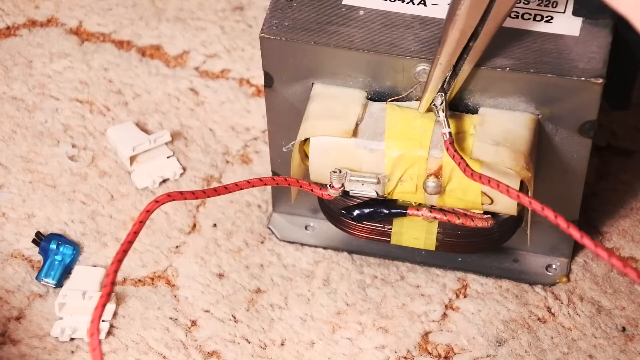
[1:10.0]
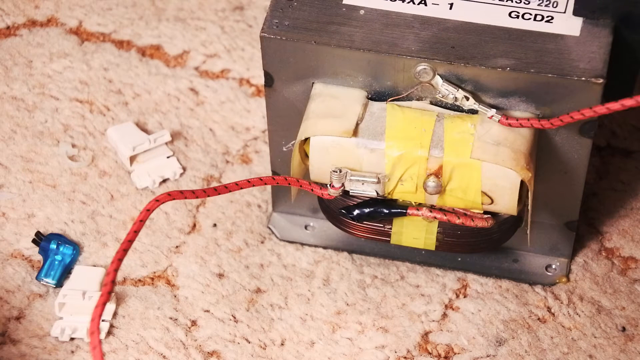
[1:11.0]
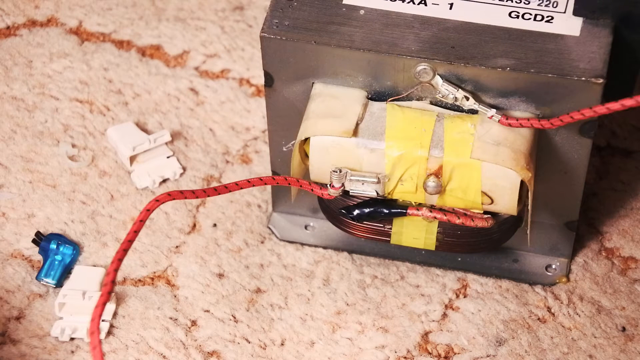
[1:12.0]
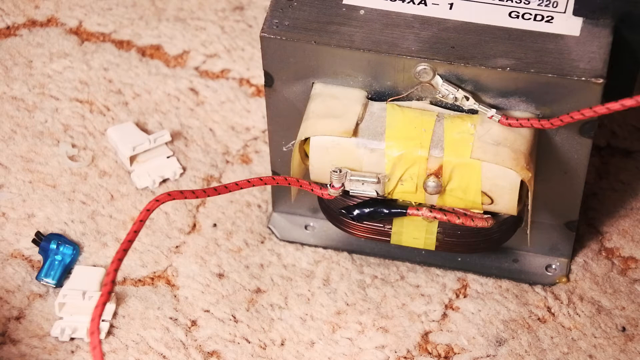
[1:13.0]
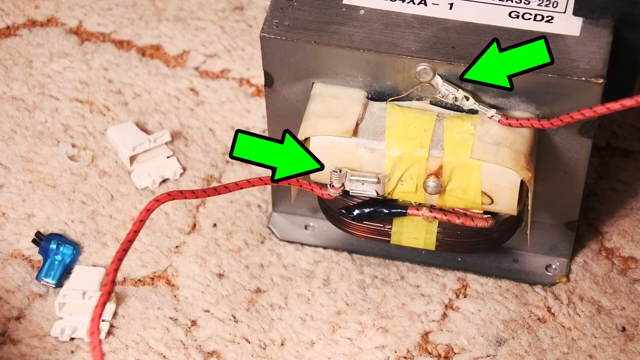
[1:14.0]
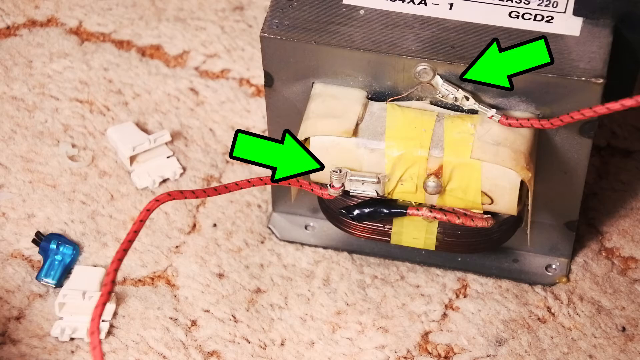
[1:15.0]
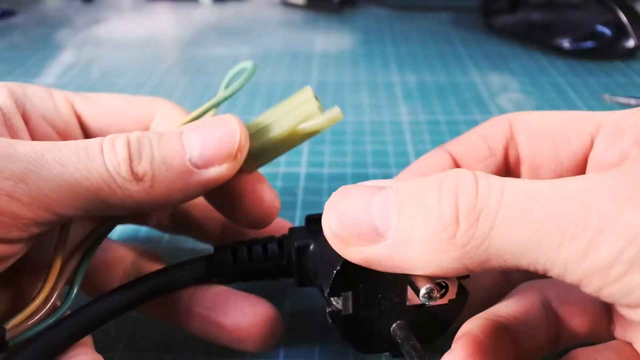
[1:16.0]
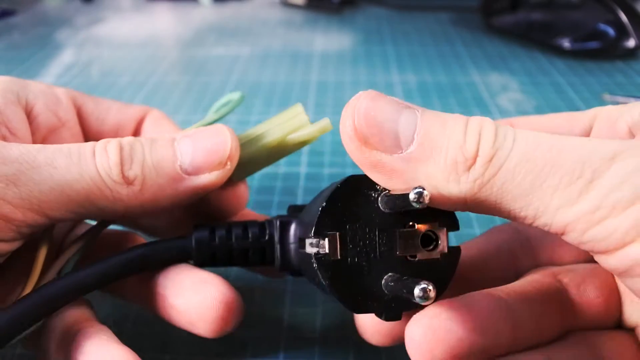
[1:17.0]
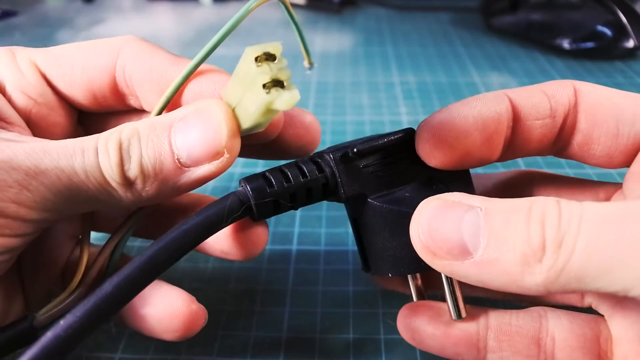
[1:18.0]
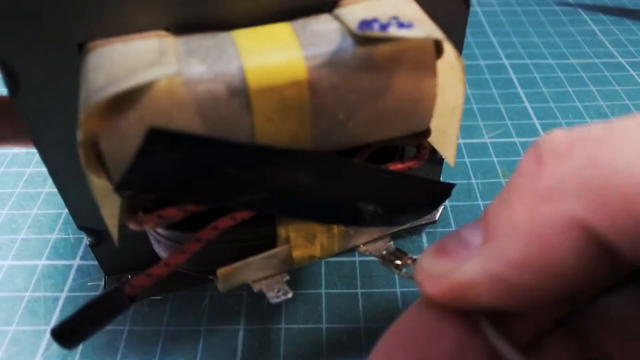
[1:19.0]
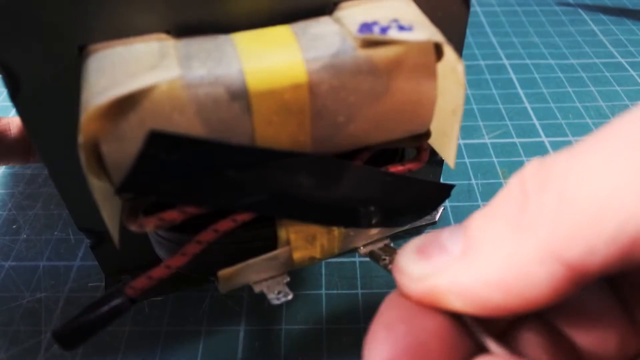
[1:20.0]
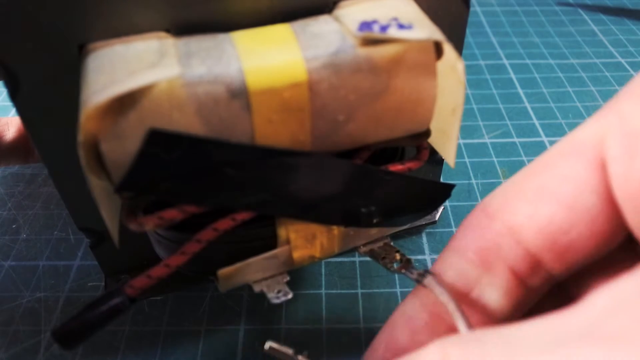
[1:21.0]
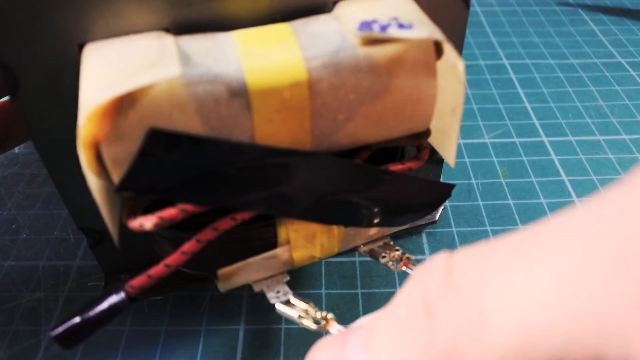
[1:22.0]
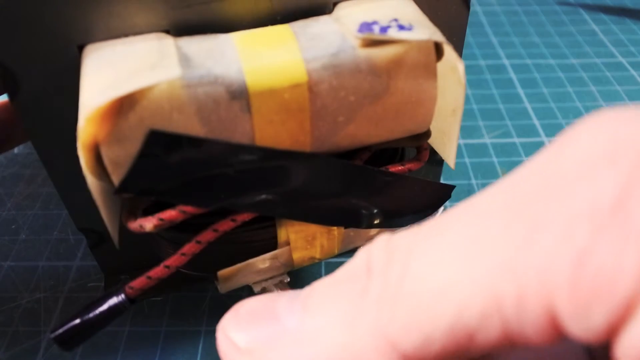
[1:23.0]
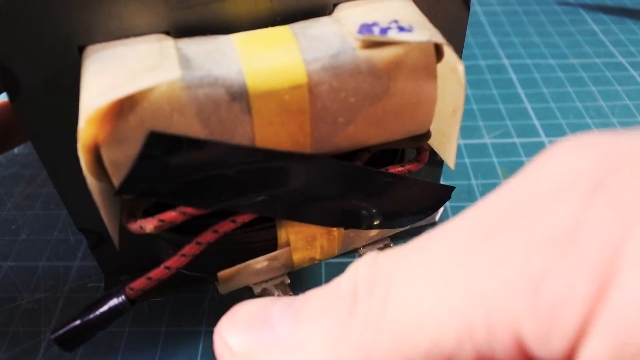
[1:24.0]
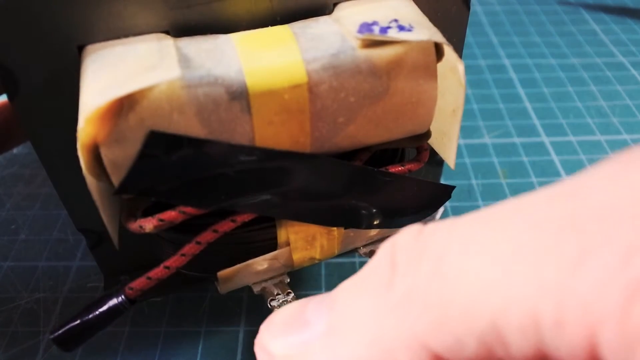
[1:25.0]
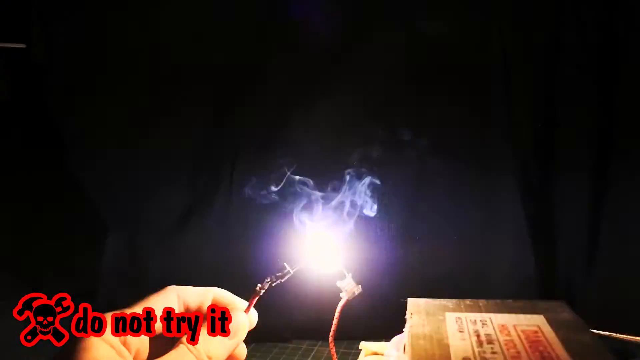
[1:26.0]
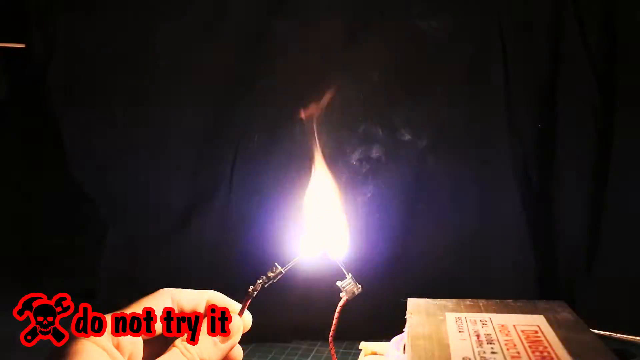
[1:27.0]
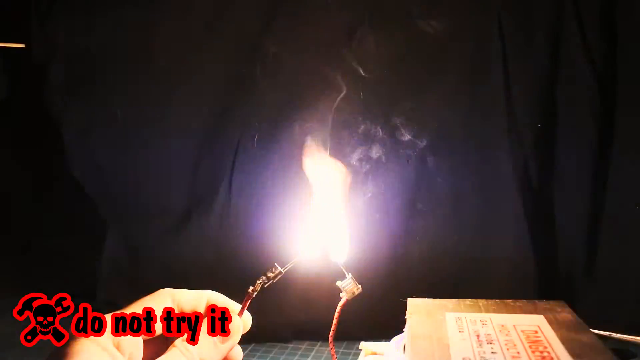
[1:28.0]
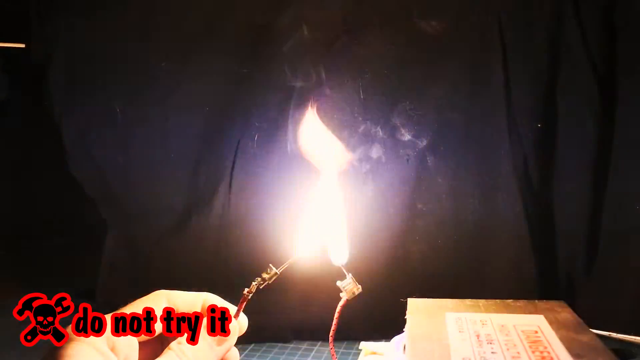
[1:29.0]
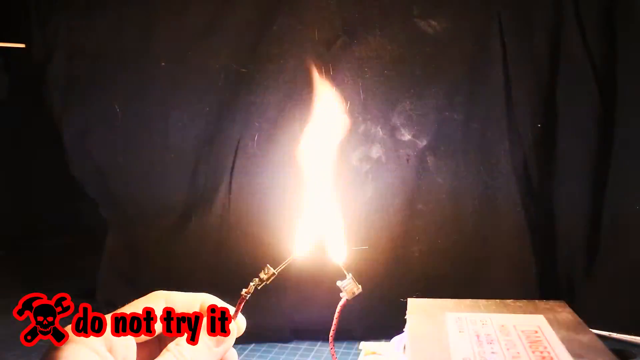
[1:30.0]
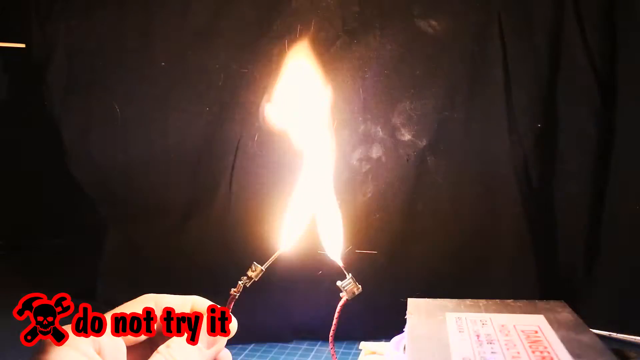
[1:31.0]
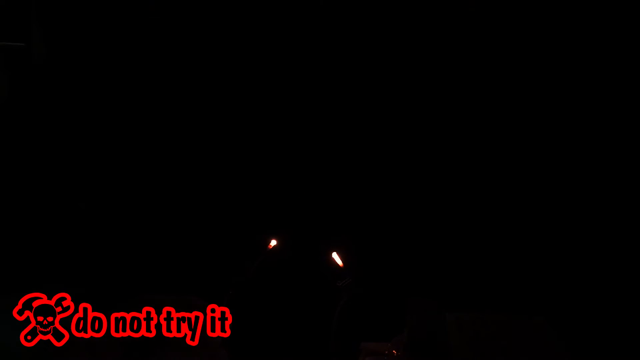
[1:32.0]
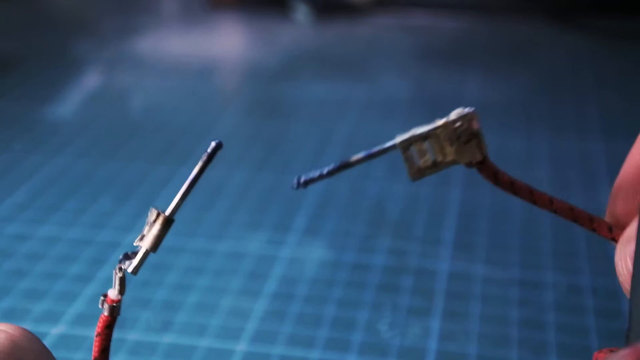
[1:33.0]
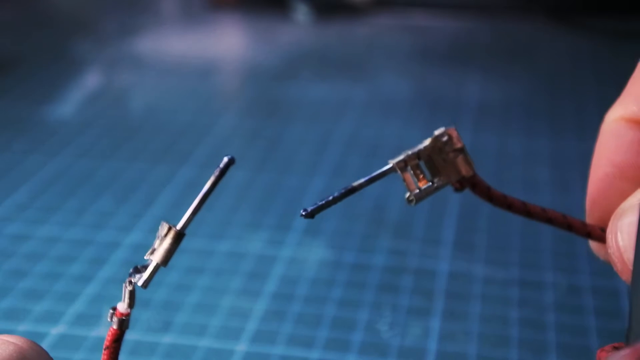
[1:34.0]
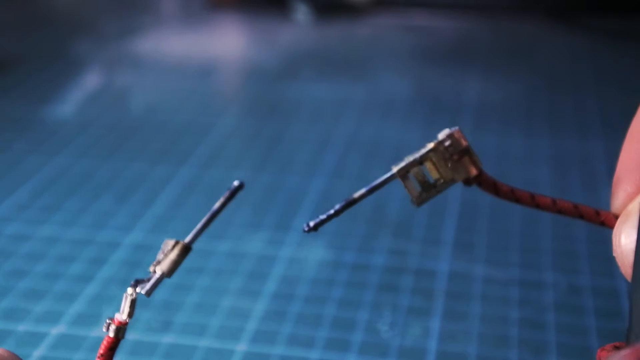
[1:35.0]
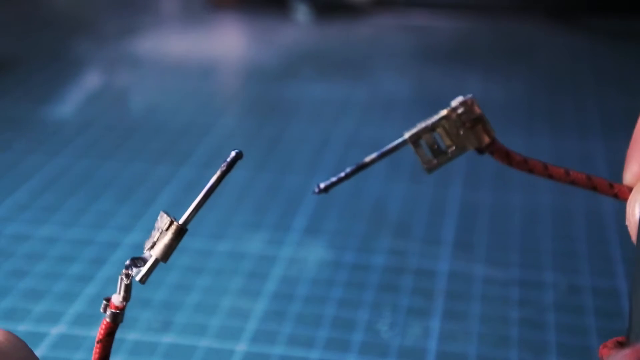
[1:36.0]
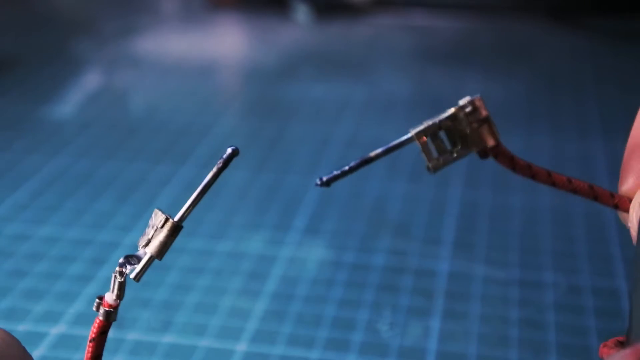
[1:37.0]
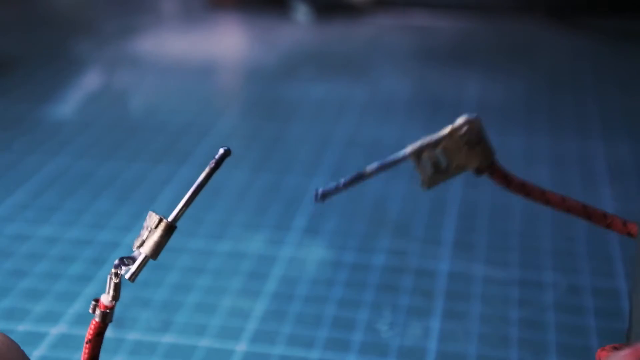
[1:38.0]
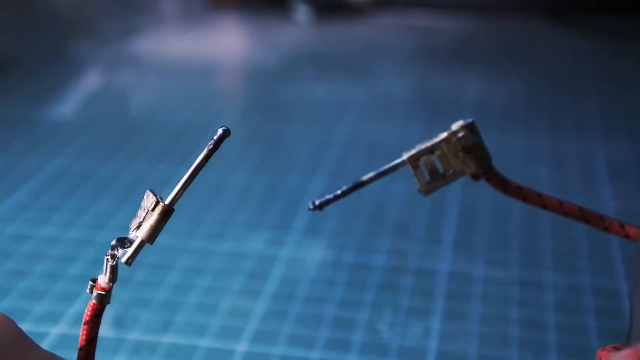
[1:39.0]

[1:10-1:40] Wires are connected to an unidentified part, maybe a new power supply, using pliers and a screw, sort of like connecting a battery to something else. Some very small components are put onto what is possibly a battery. A warning not to try heating these things and causing a fire flashes over and over. Two components that were on fire earlier appear, and the video cuts away before showing what is done with them.